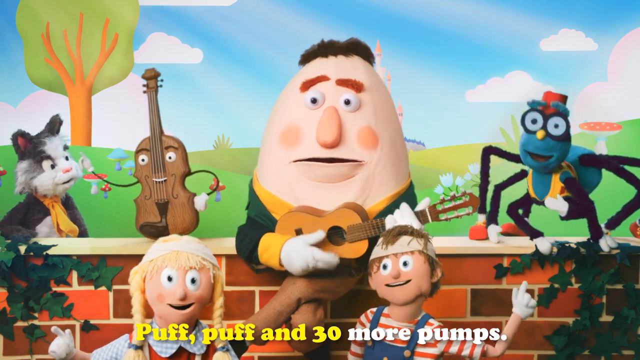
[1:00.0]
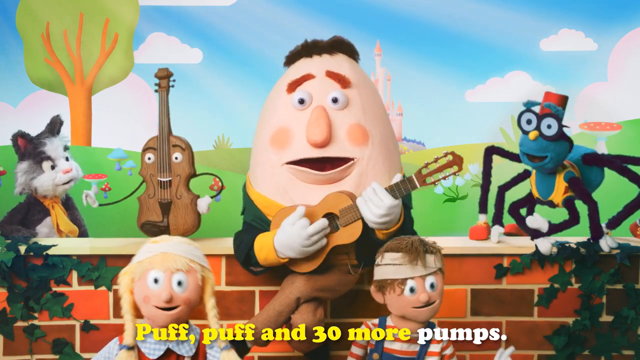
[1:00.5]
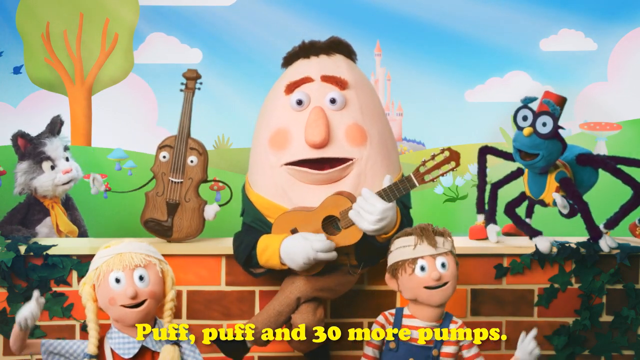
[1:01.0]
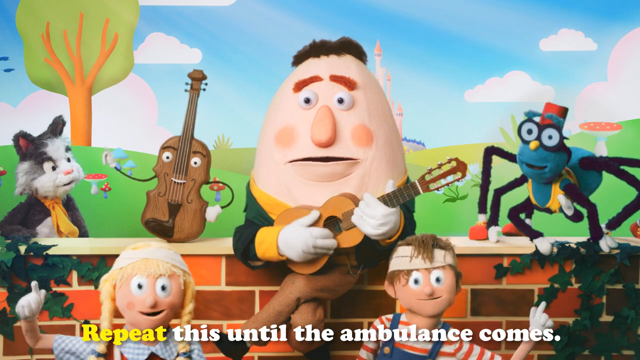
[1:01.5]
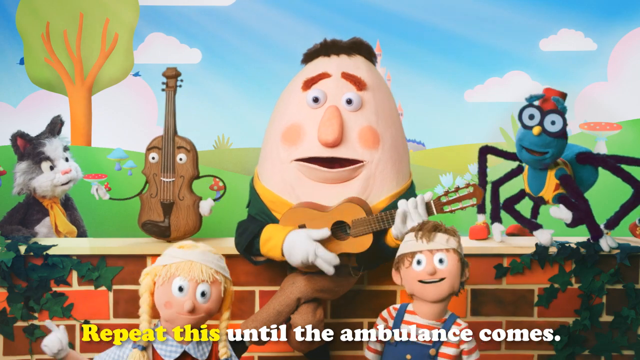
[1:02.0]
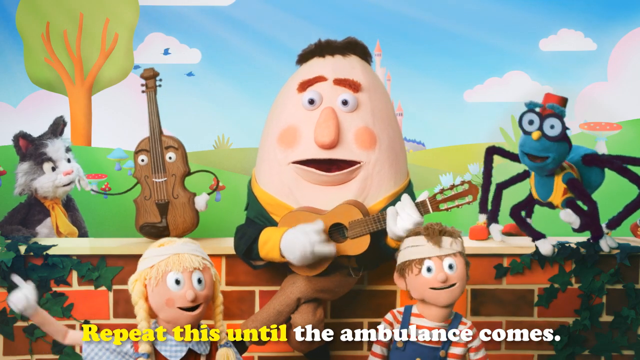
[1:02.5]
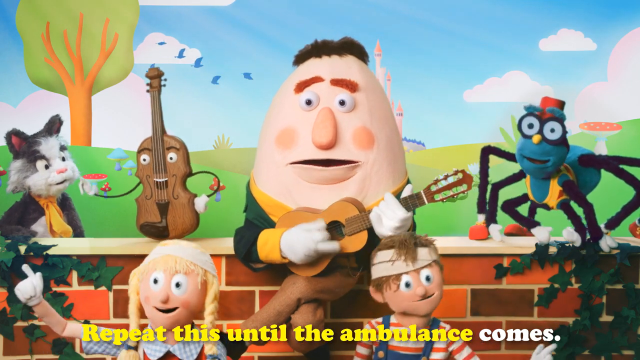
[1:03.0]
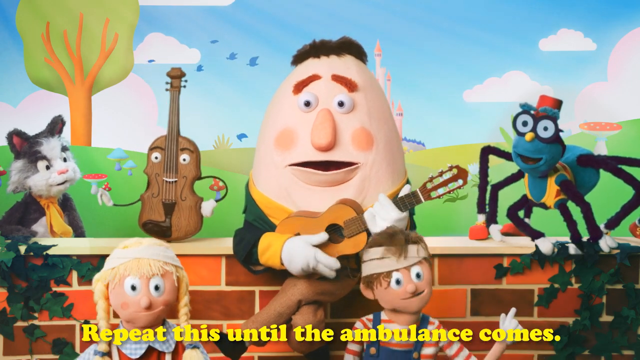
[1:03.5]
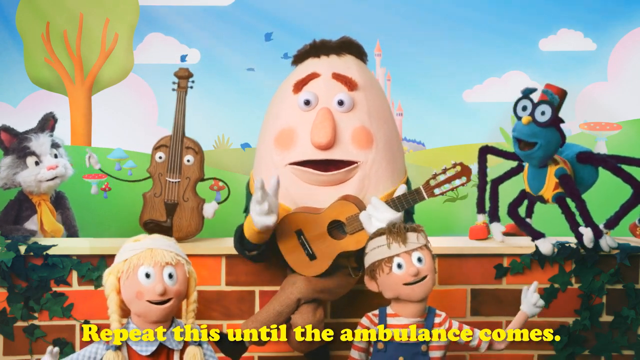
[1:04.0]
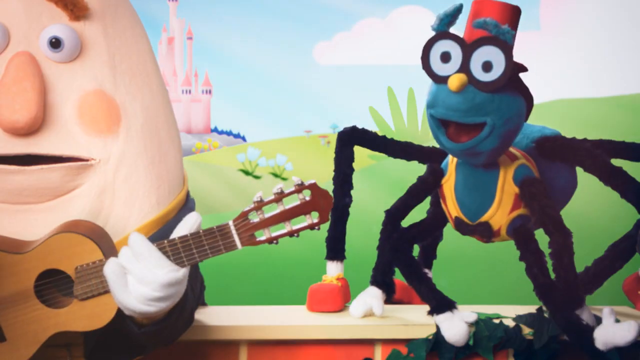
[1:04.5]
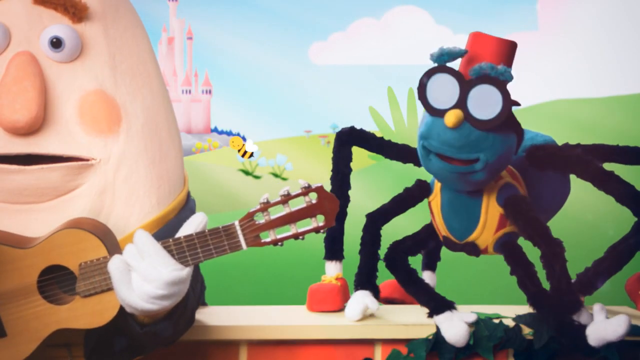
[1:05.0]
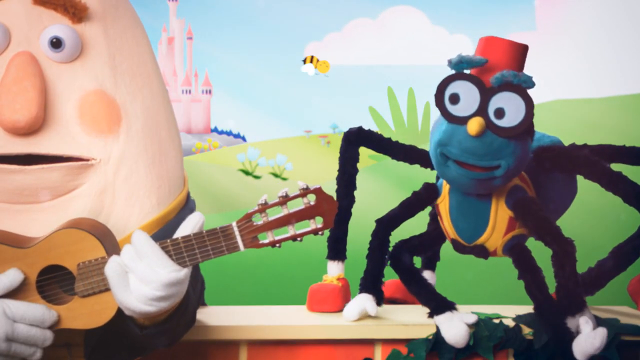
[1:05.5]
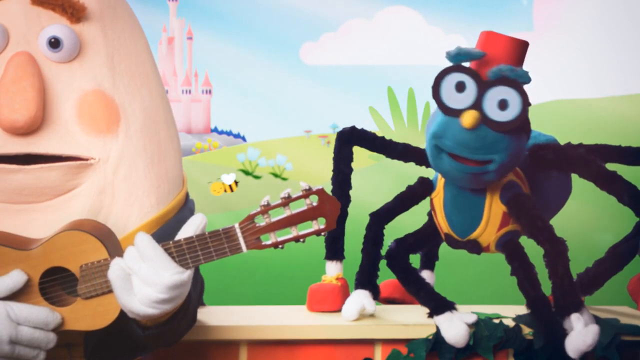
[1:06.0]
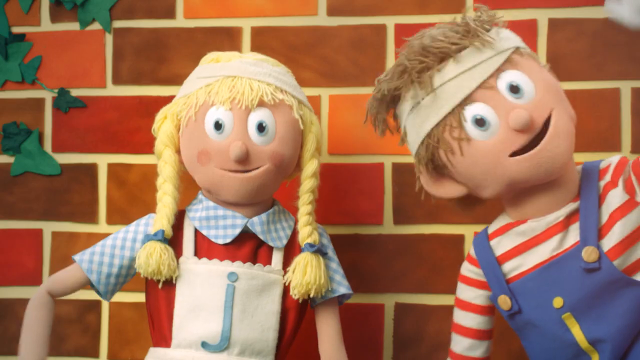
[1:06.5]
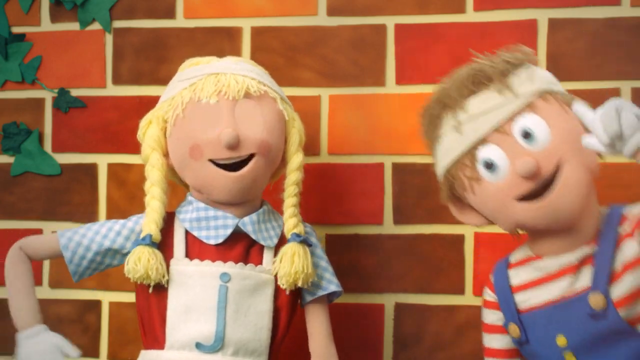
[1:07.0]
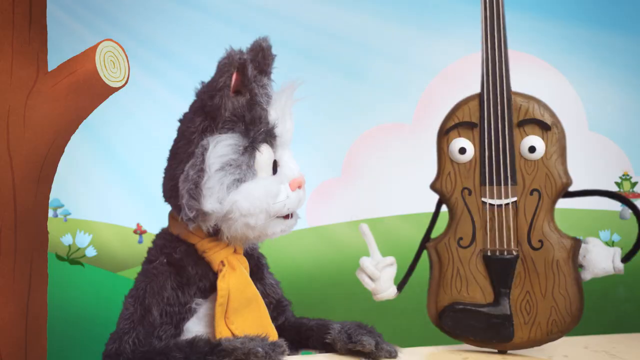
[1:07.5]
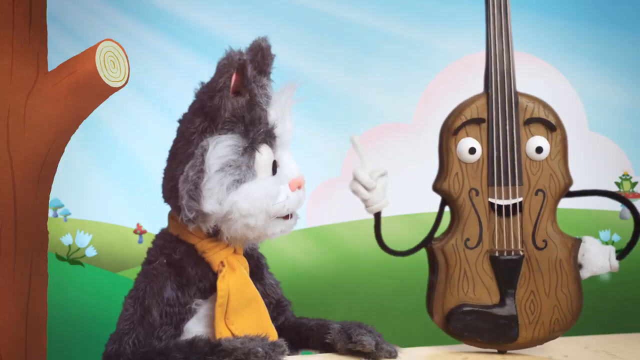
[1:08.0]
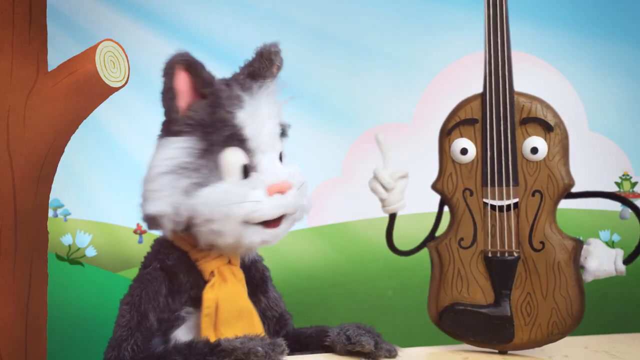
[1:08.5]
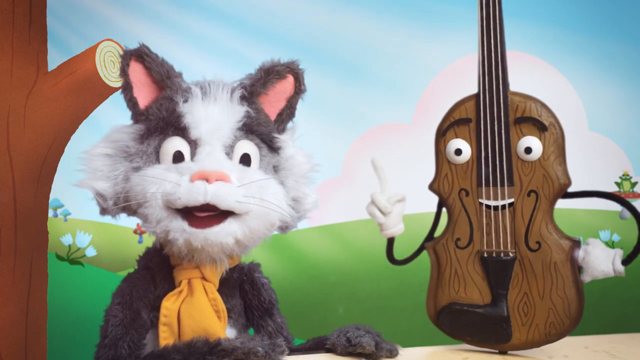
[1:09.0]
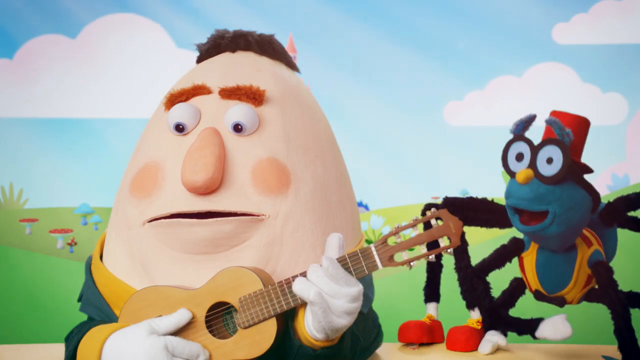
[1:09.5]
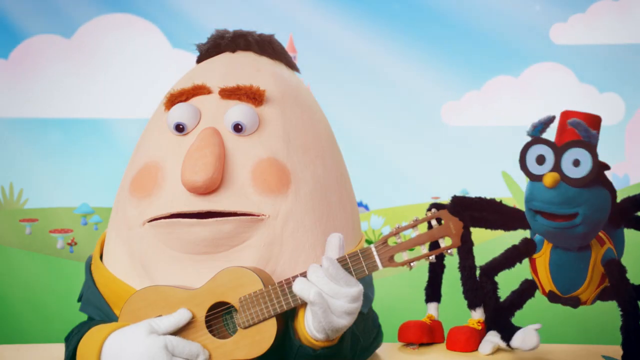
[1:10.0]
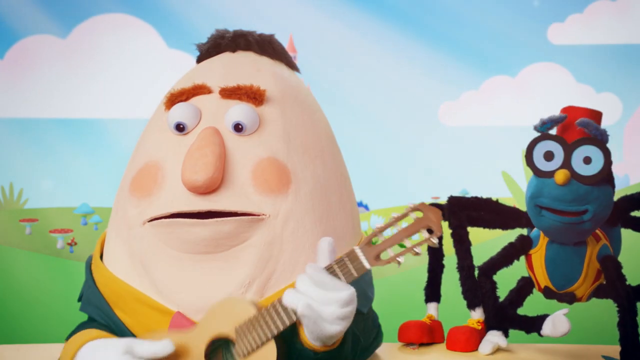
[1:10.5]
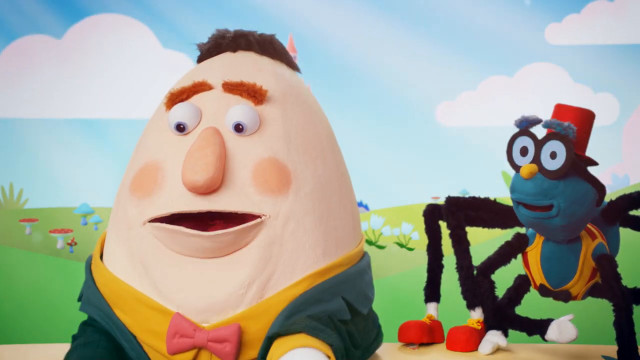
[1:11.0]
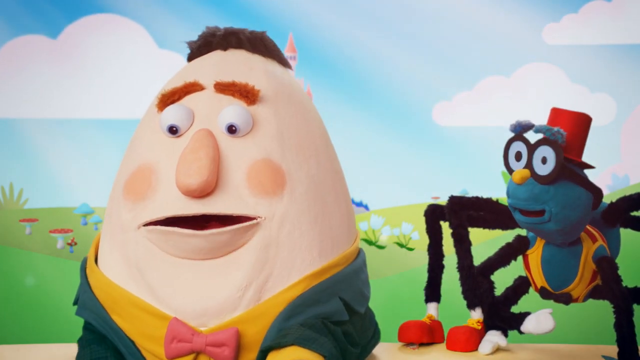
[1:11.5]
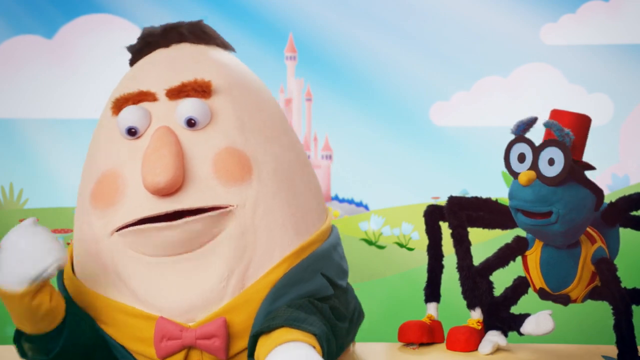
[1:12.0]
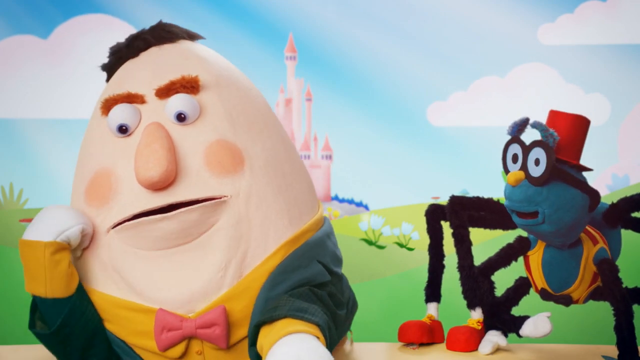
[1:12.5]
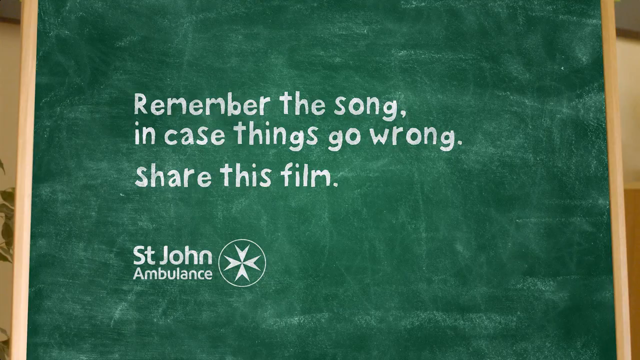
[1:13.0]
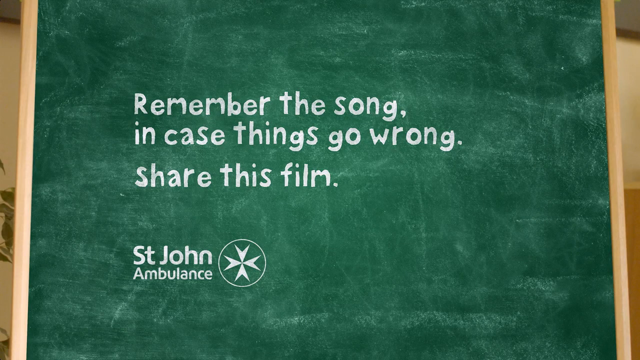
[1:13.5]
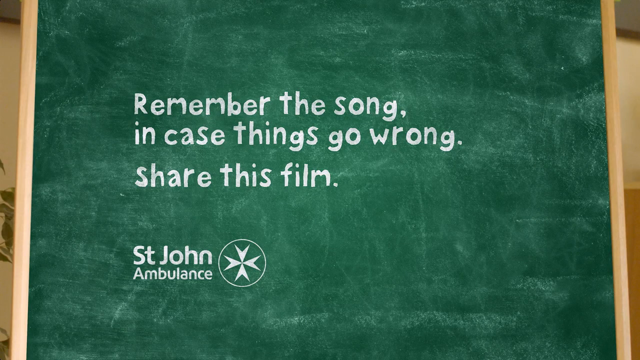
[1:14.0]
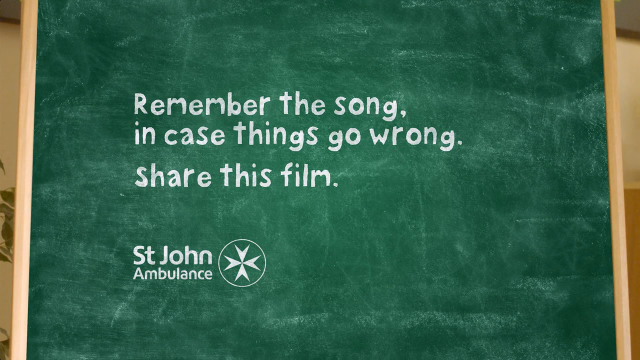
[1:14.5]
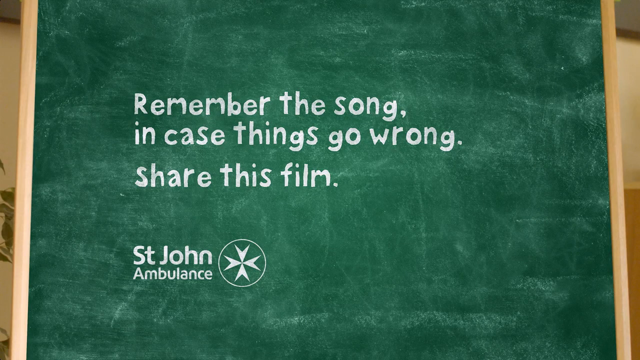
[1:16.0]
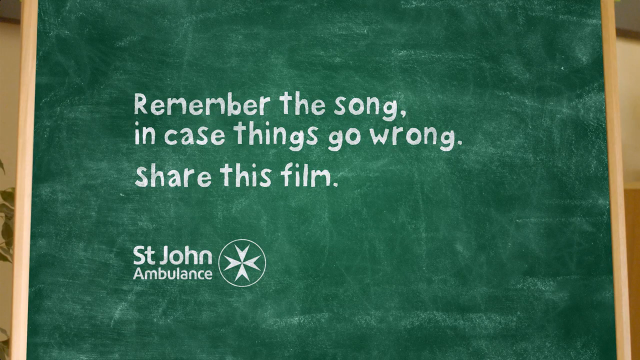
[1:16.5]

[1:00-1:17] The words "repeat this until the ambulance comes" appear. A spider sings, and what seems to be a bee goes around. The cat is there and Humpty Dumpty is there; he stops playing. The artwork is a cartoon animation that probably is older.